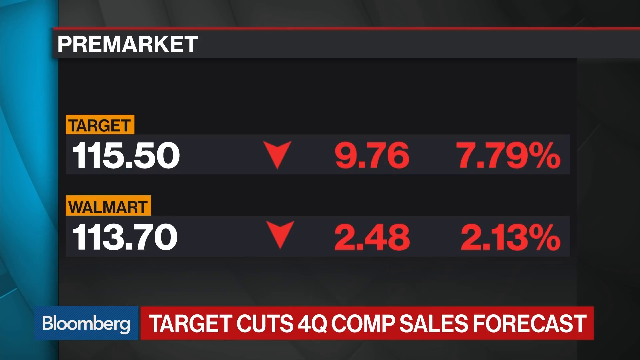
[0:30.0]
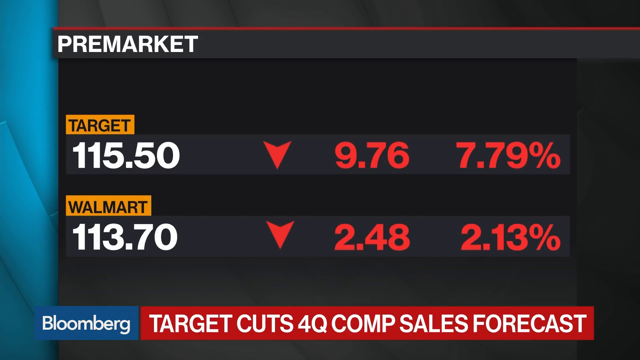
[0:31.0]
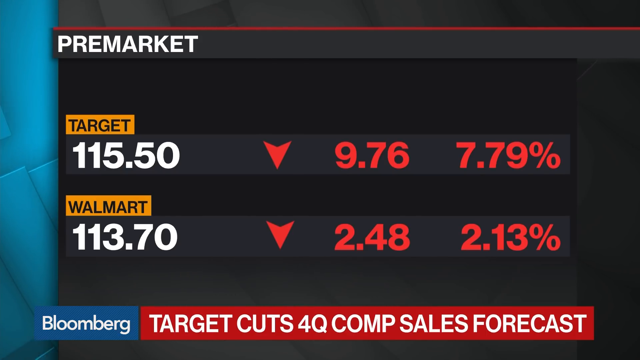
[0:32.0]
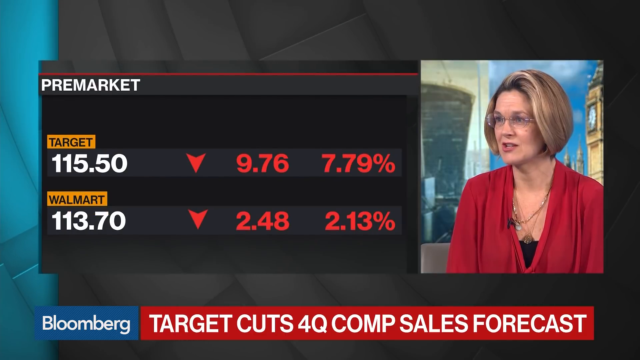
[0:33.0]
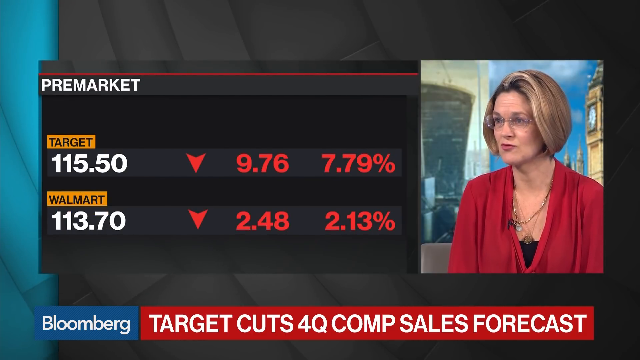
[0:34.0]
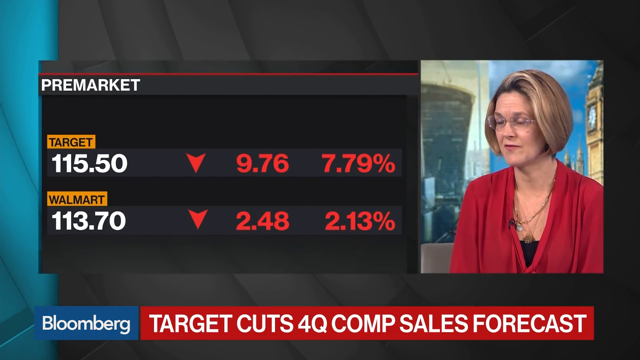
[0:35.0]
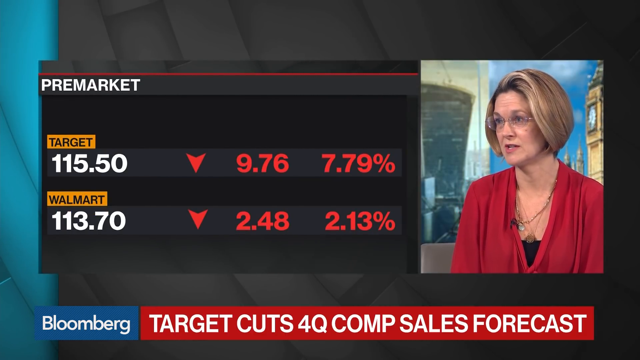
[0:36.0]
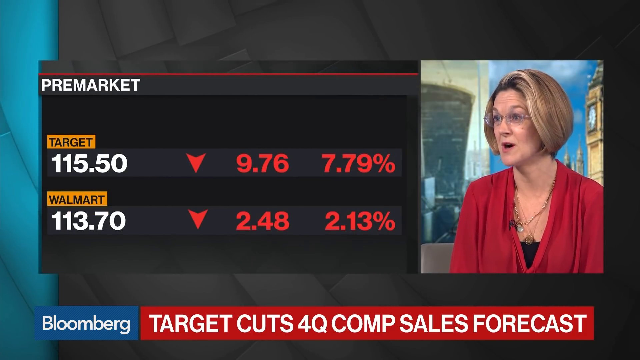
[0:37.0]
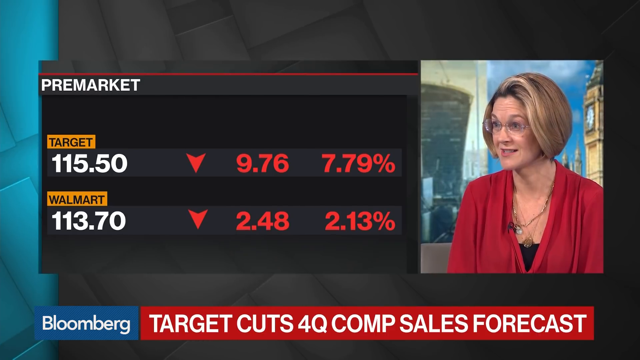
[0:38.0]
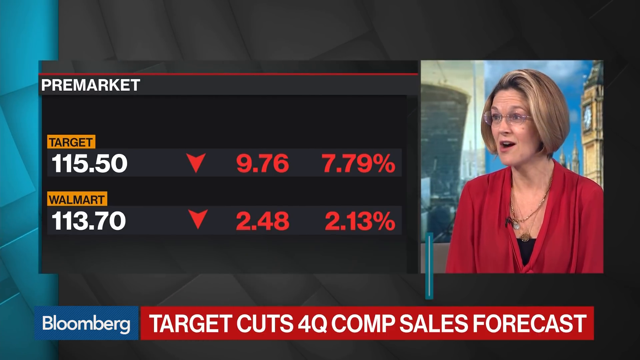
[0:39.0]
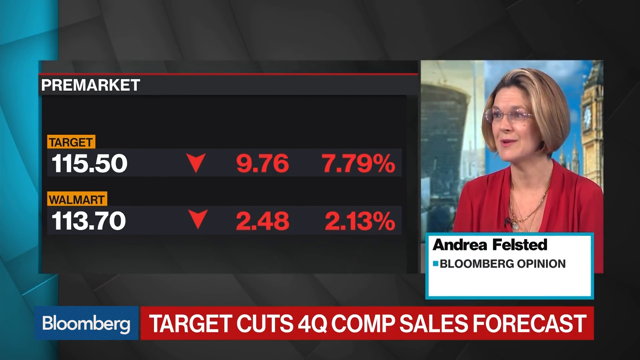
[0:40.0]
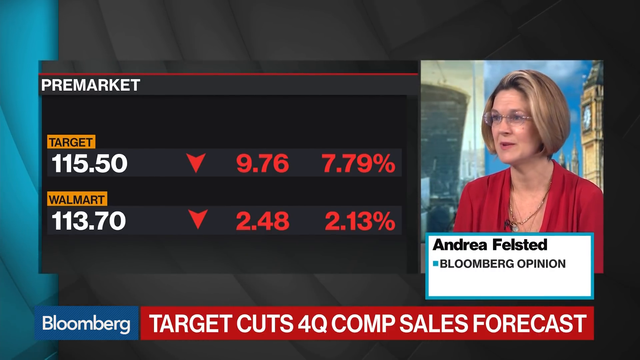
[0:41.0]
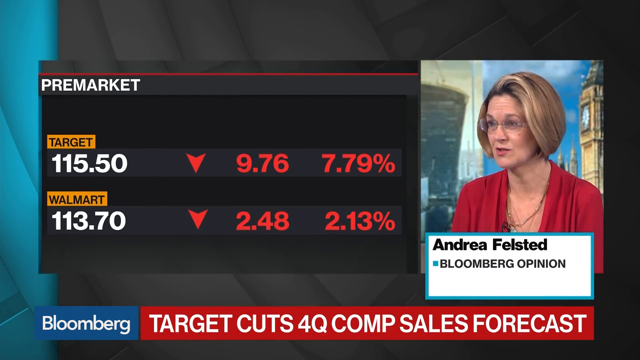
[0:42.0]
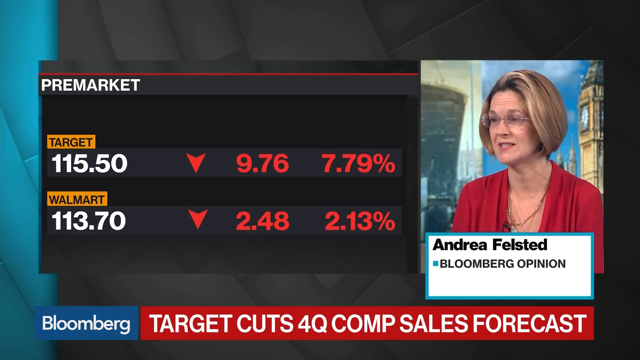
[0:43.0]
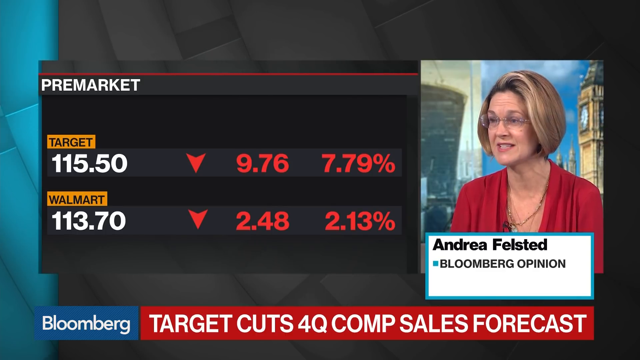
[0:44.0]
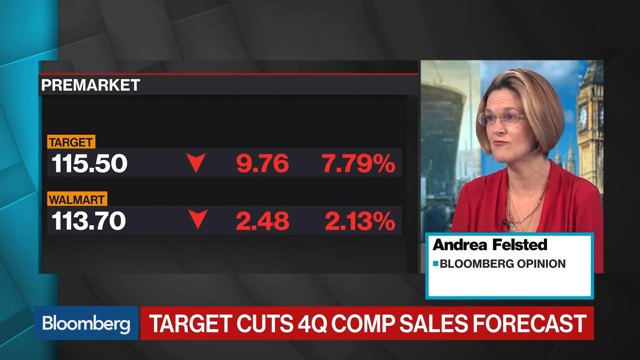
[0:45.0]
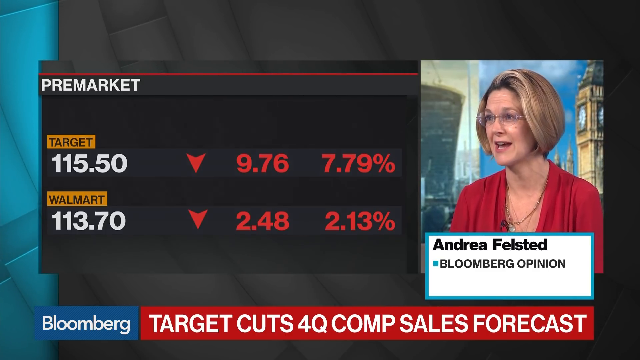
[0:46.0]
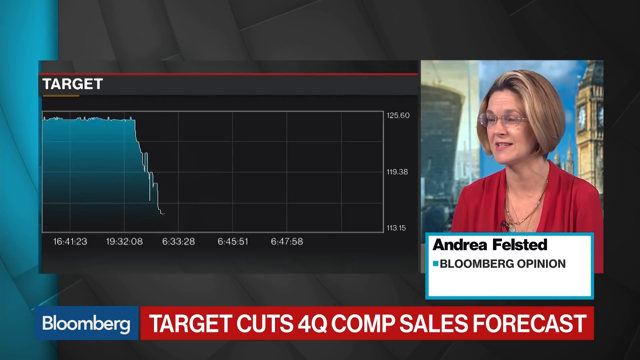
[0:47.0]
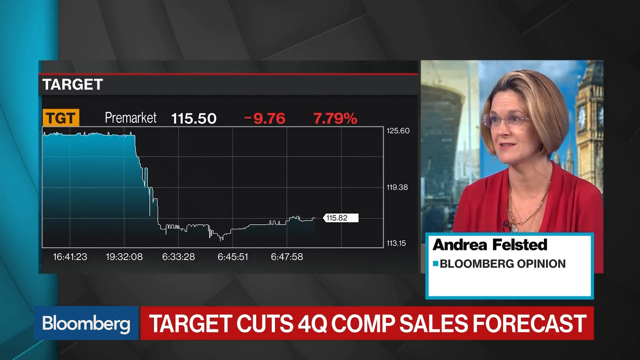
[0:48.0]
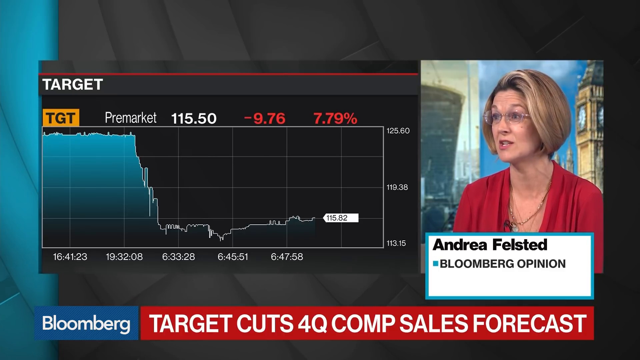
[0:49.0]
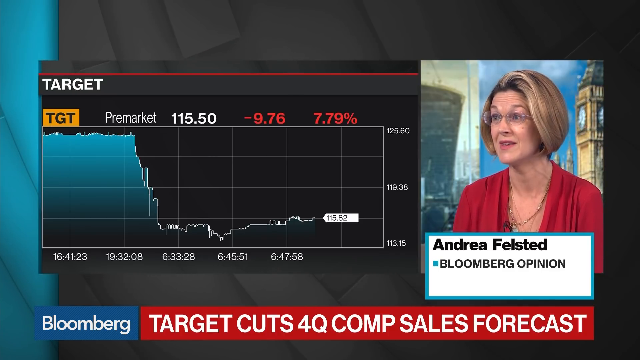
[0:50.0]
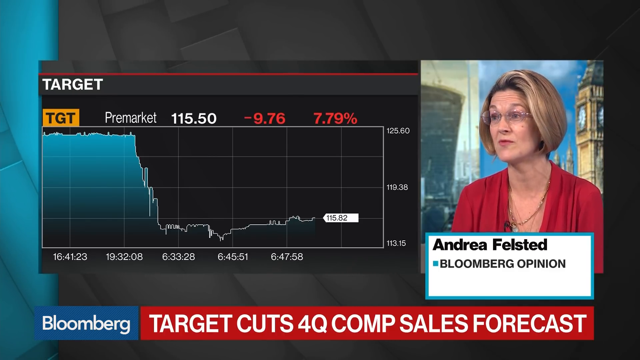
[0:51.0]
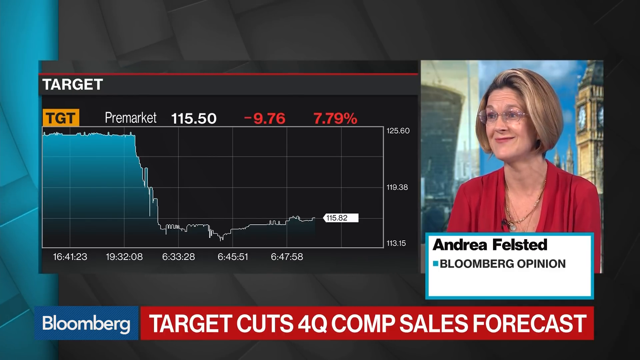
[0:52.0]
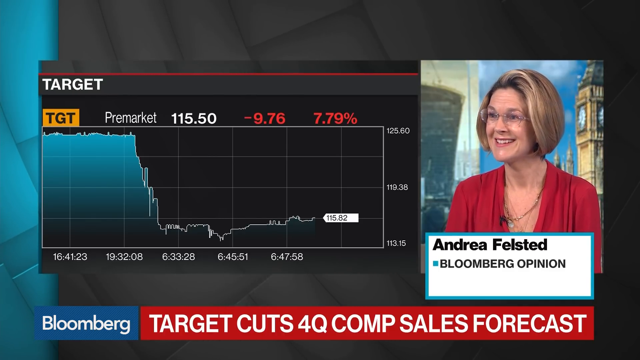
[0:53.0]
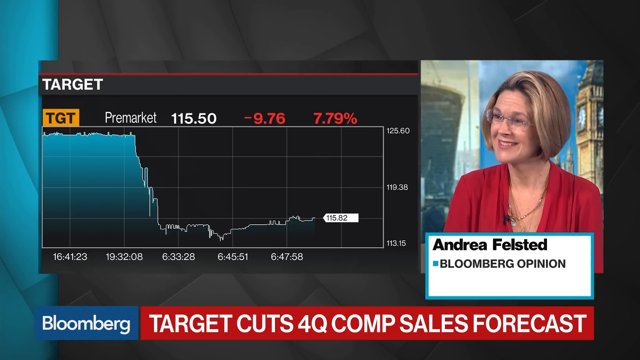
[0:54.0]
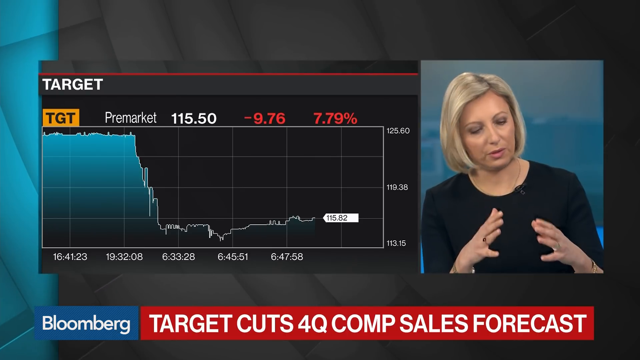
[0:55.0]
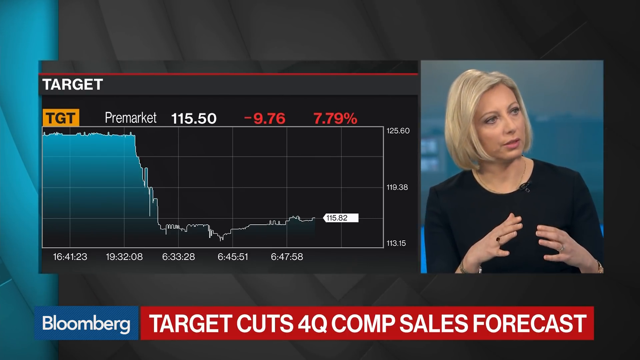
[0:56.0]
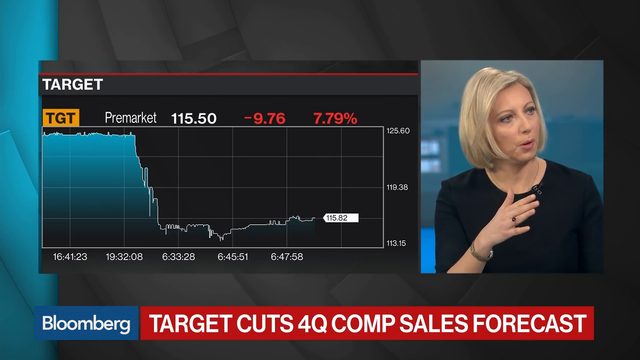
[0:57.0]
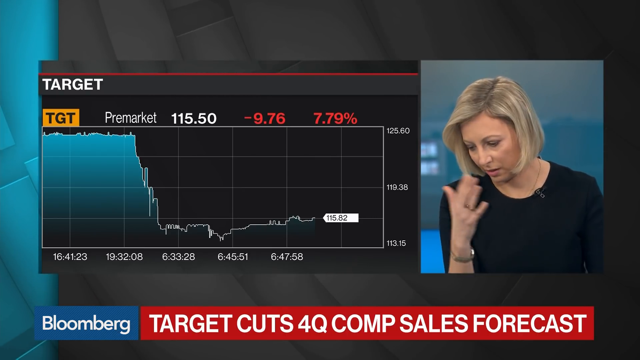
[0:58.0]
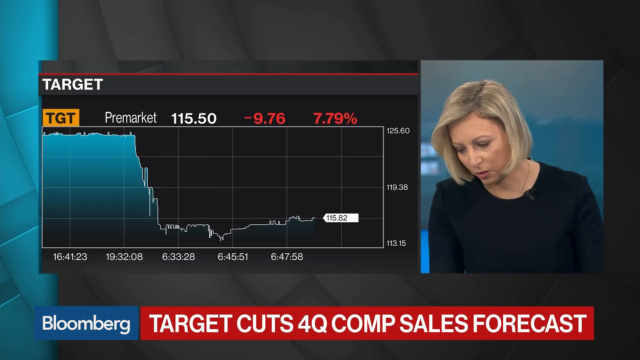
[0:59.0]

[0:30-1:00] Stock market information for Target and Walmart fills the opening scene of this news show portion. The top left of the screen says "pre-market"; directly underneath is the data for Target, and underneath that the data for Walmart. Red arrows point down, showing that something has dropped for both. The scene changes, and the same information appears in a smaller form on the left side of the screen, while the woman in red who was sitting next to the TV host is shown in a small video next to it, speaking to the host. Her name appears underneath her video: "Andrea Felstead, Bloomberg Opinion". As she continues talking, the stock market information changes to a graph showing how Target has been doing over time. The woman in red smiles and stops talking, and the news host begins talking in reply.